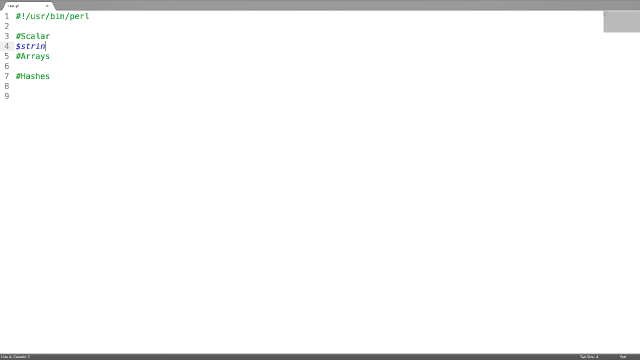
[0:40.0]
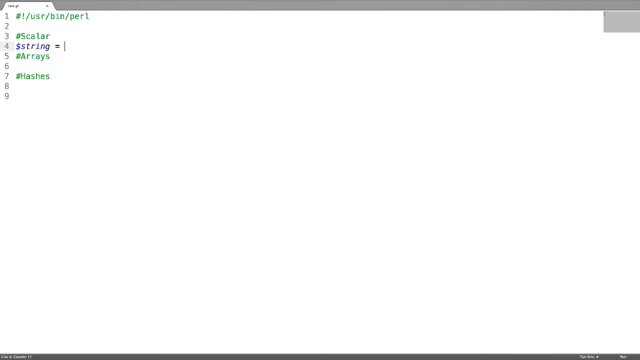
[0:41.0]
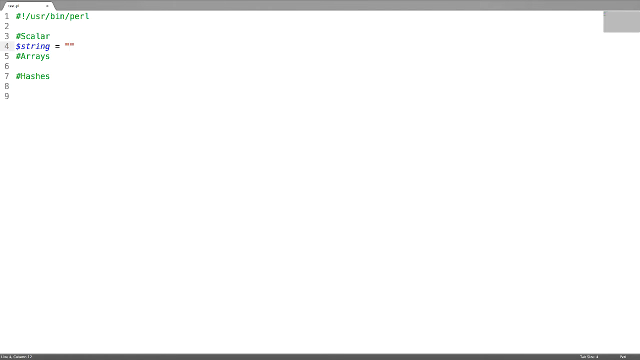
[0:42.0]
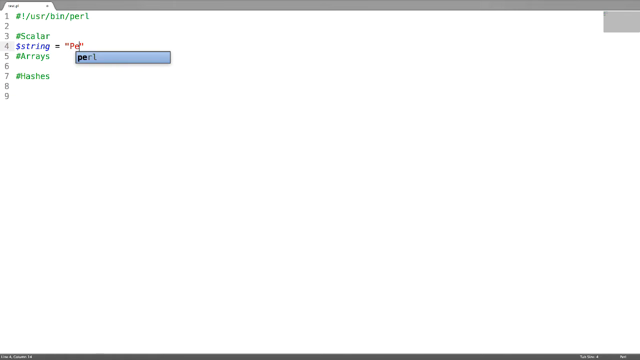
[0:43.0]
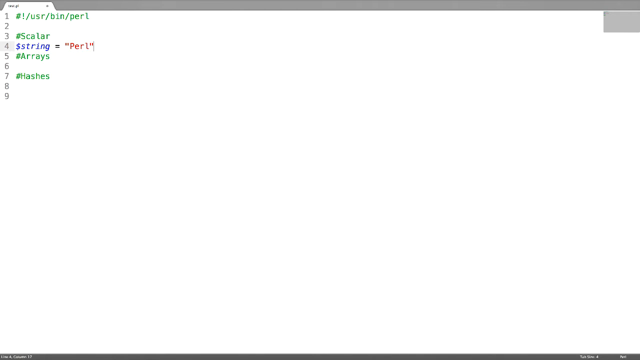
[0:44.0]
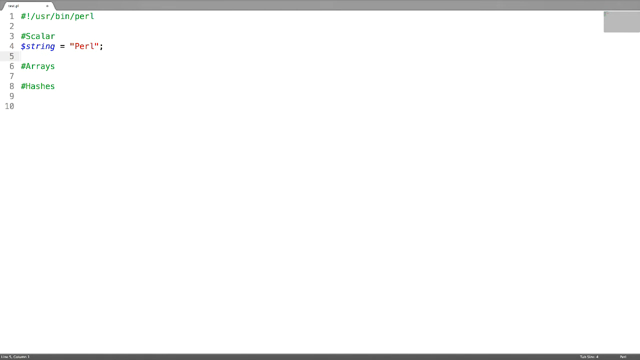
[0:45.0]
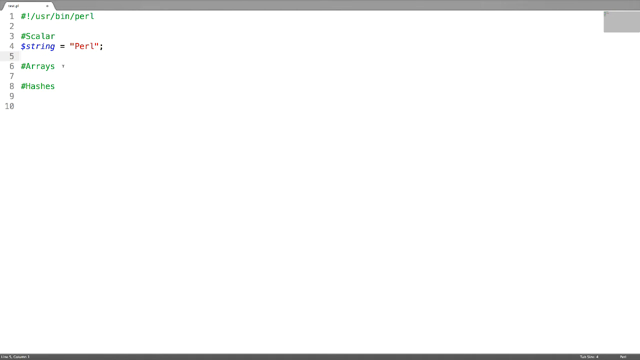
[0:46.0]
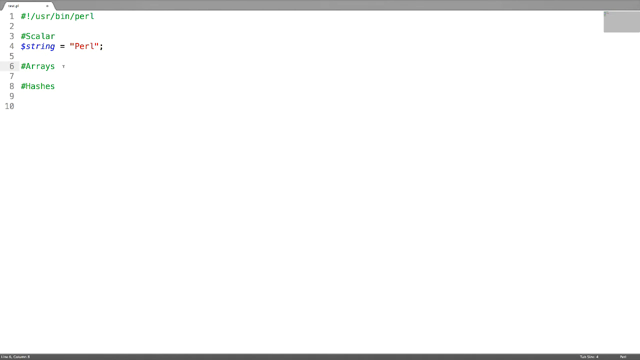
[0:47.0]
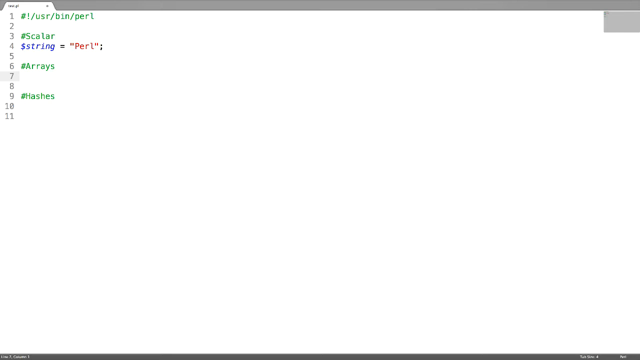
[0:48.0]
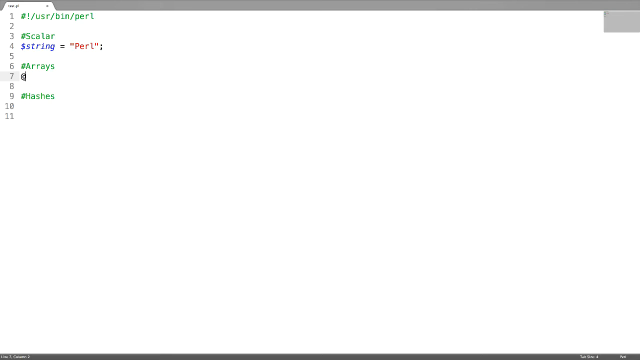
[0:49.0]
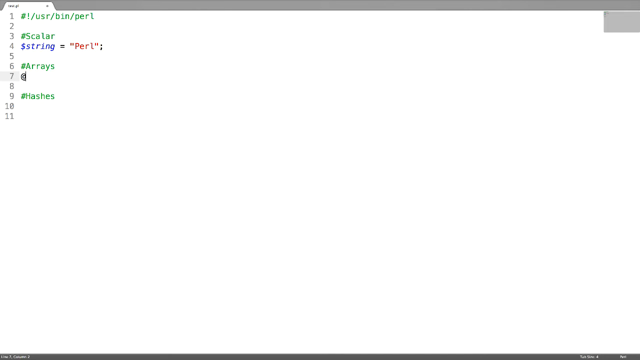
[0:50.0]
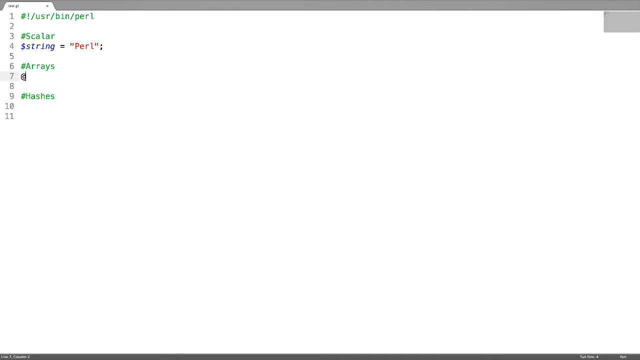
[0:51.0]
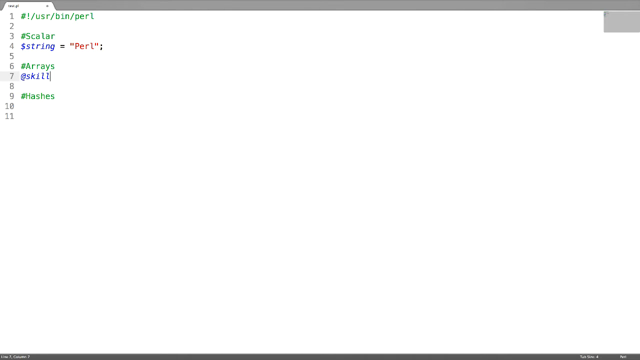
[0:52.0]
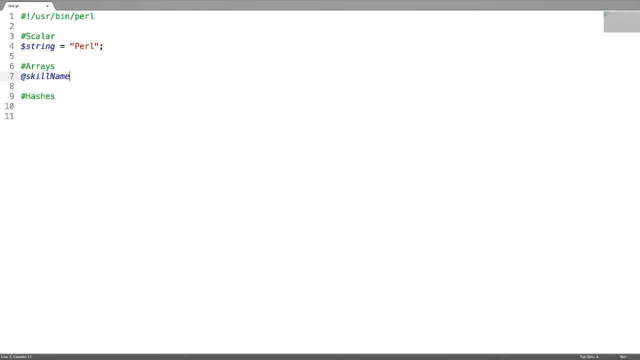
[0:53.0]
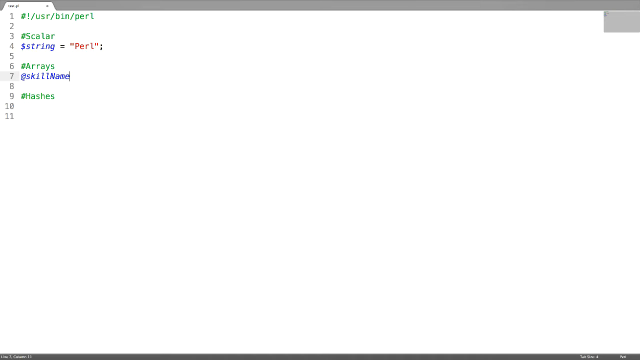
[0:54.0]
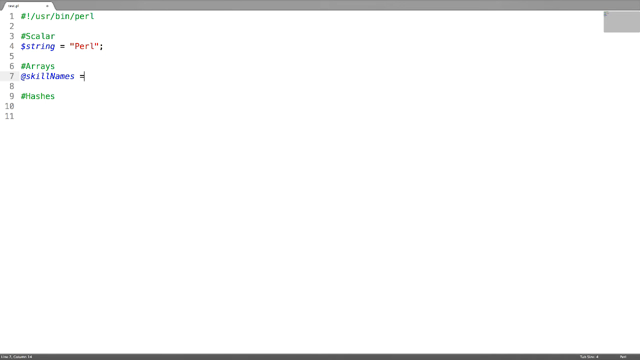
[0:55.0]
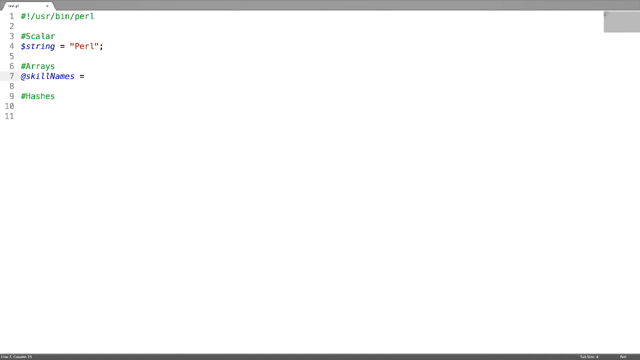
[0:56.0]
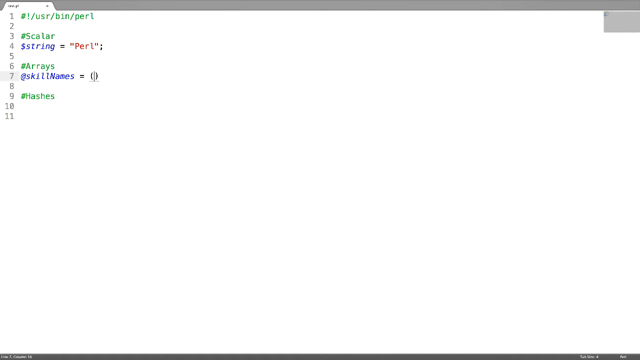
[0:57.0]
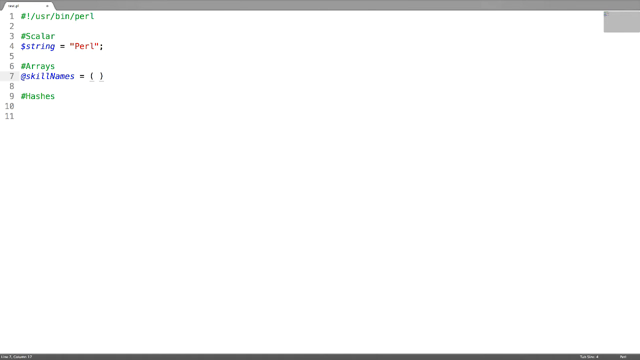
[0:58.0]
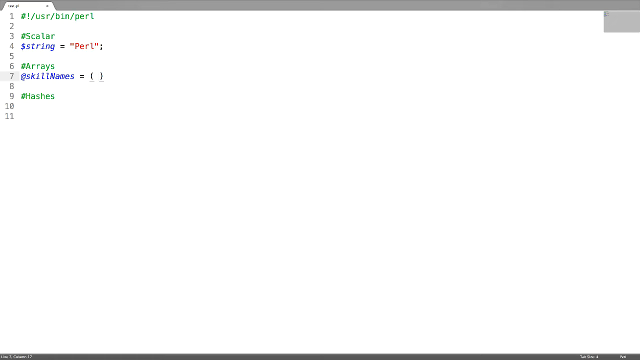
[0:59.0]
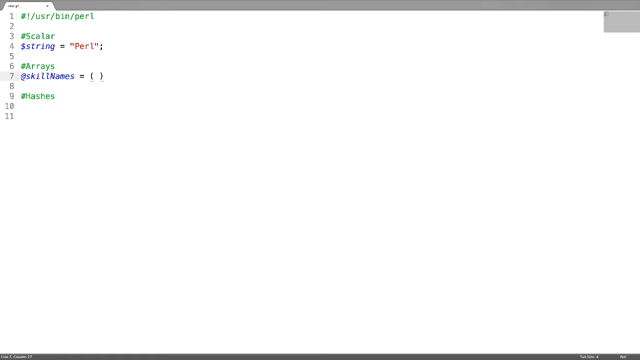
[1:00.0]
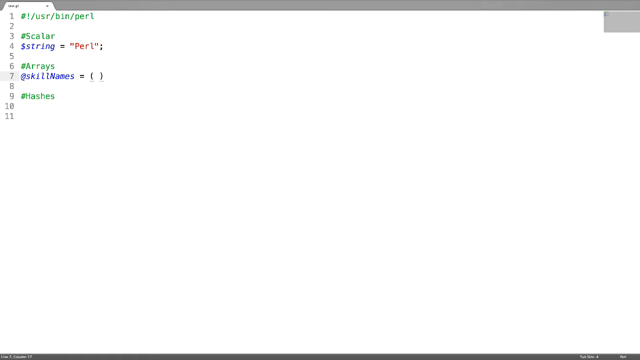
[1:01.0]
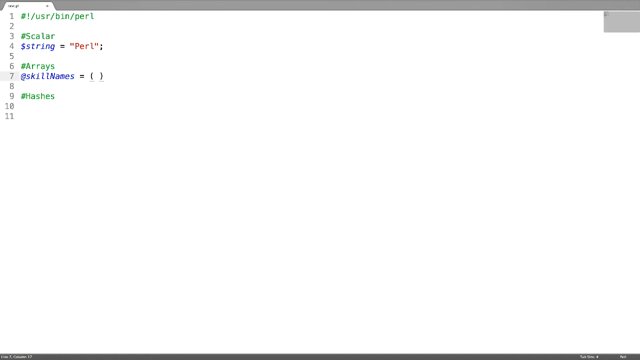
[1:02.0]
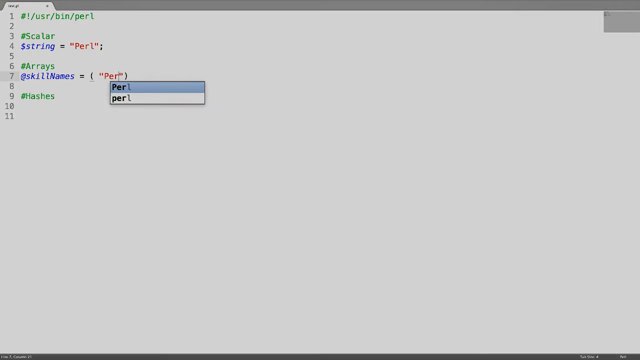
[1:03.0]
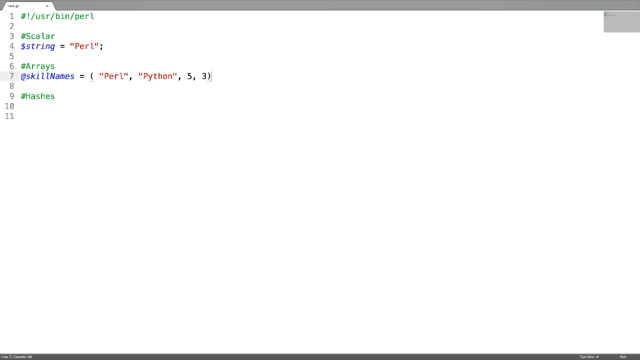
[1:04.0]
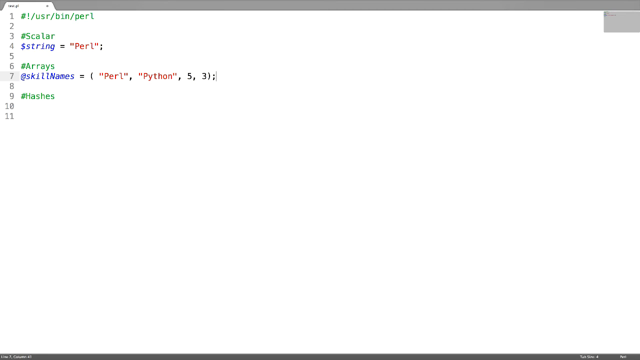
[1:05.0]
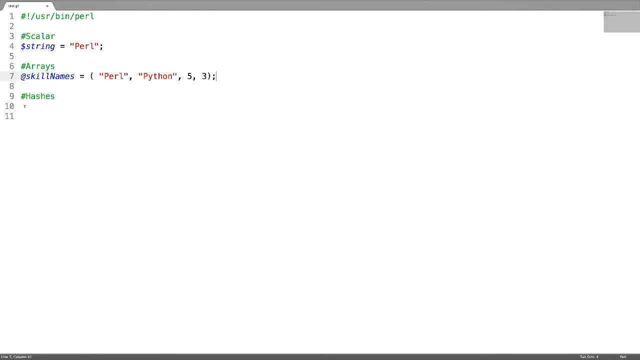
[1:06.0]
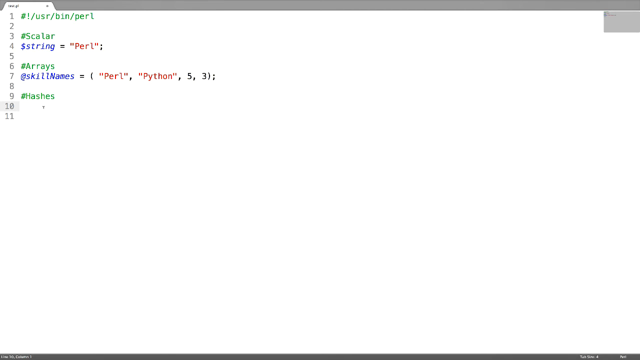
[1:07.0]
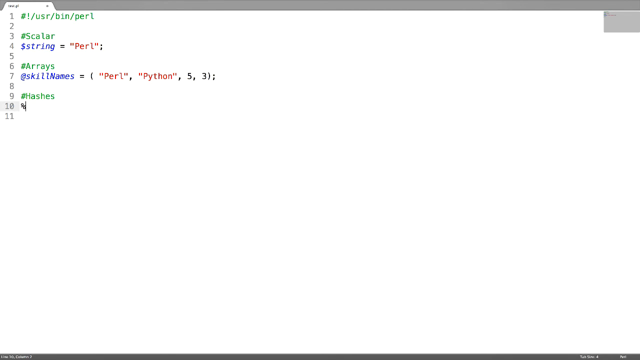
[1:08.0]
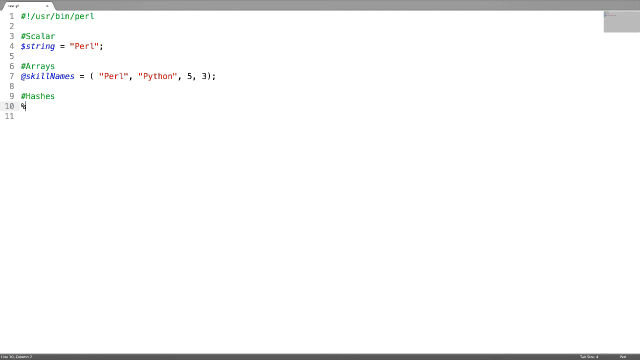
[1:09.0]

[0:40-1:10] A string is written, and "perils" appears in red. The string is in dark blue and set equal to peril. On line seven, under arrays, the person writes x and then scales names, an equals sign, and brackets containing peril, python, five and three. The person then goes down to # and a percentage sign and enters the percentage. The video pauses, and the new tab shows an example of the different hashes.